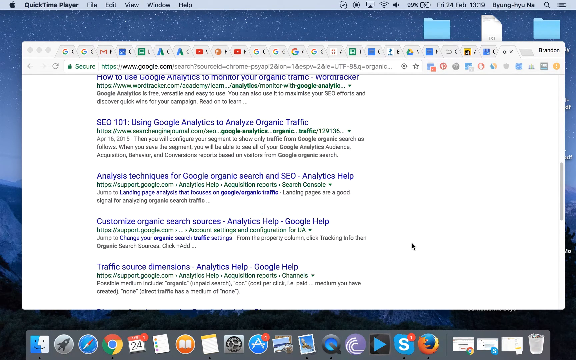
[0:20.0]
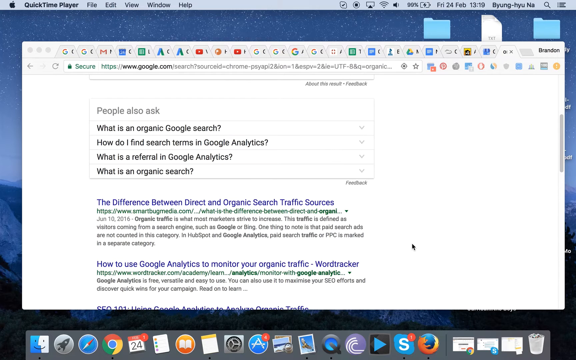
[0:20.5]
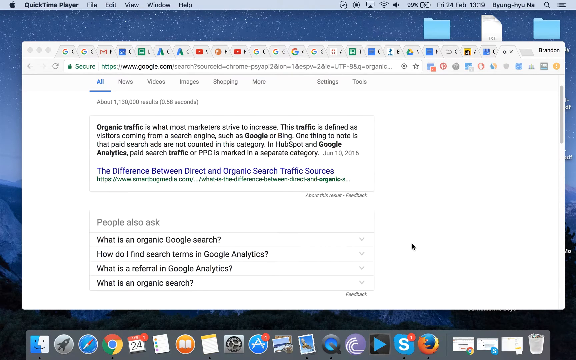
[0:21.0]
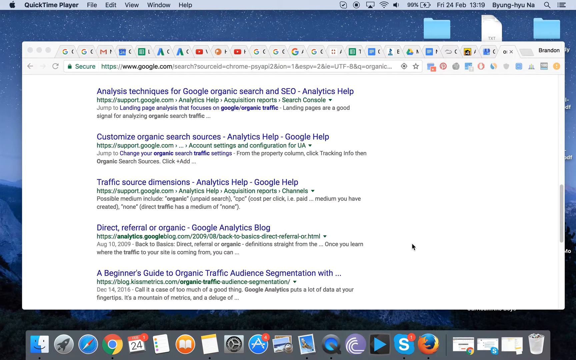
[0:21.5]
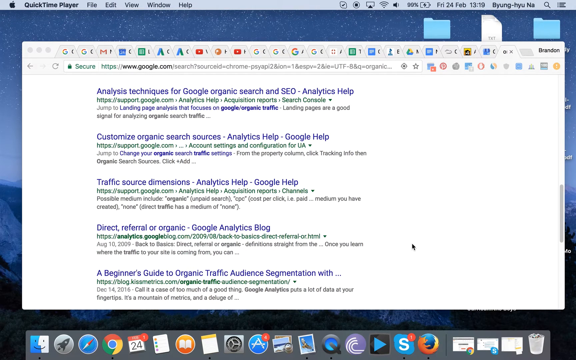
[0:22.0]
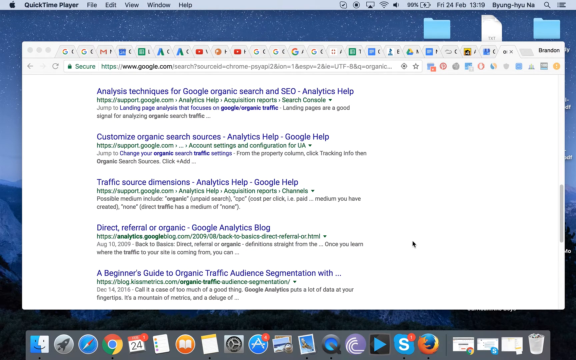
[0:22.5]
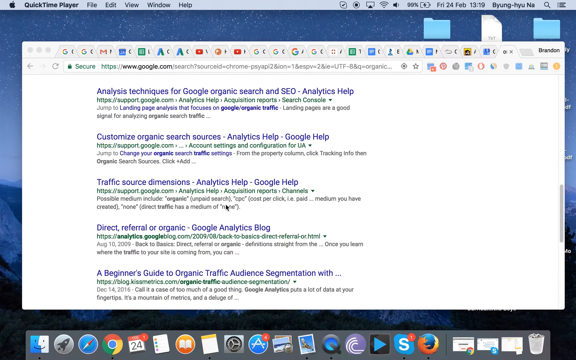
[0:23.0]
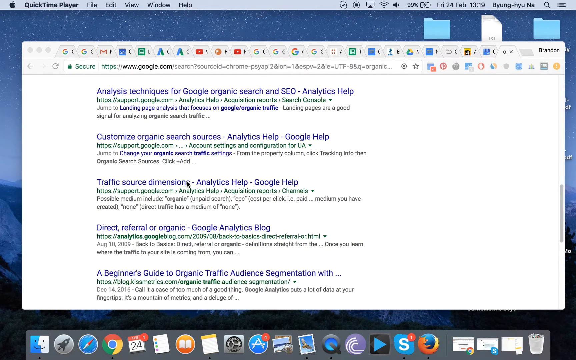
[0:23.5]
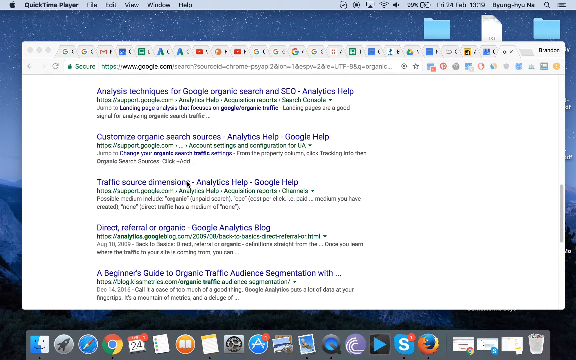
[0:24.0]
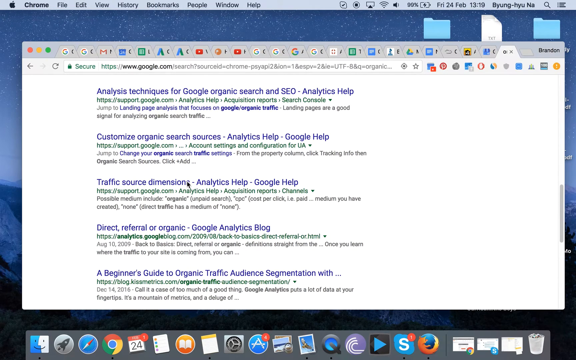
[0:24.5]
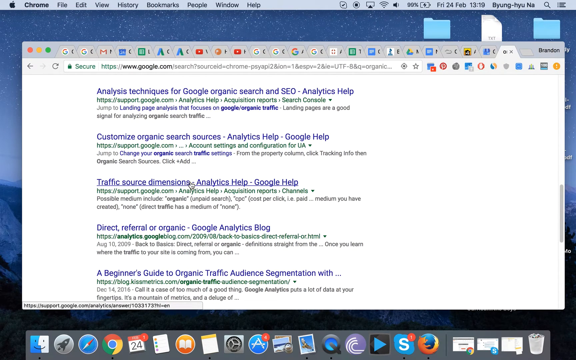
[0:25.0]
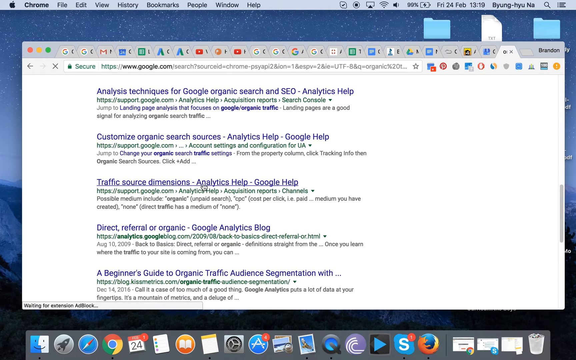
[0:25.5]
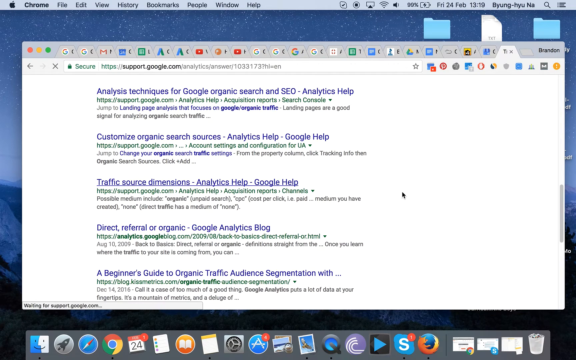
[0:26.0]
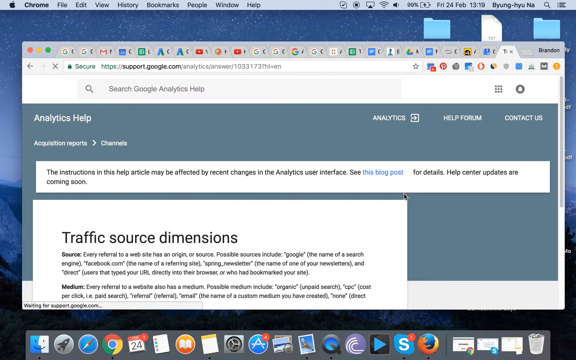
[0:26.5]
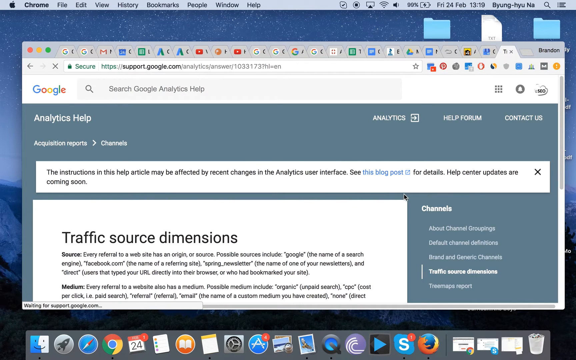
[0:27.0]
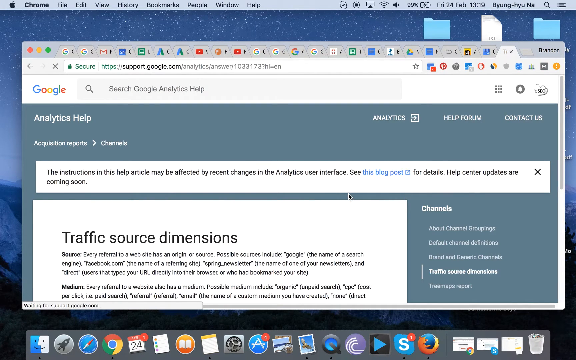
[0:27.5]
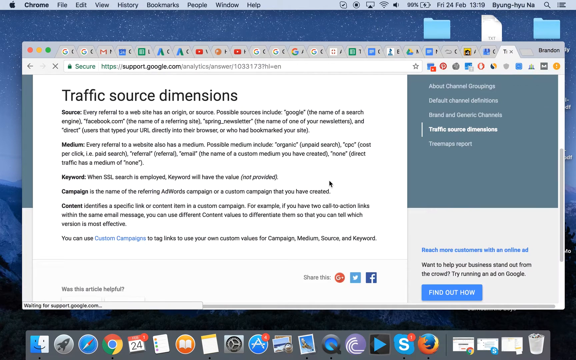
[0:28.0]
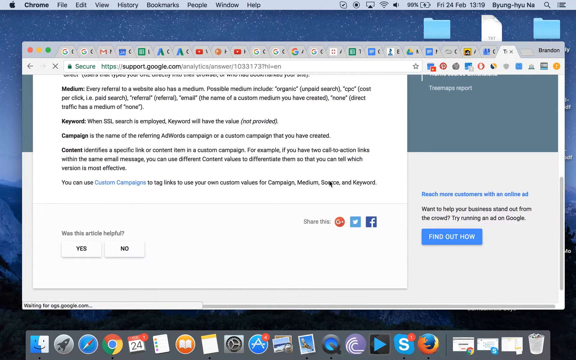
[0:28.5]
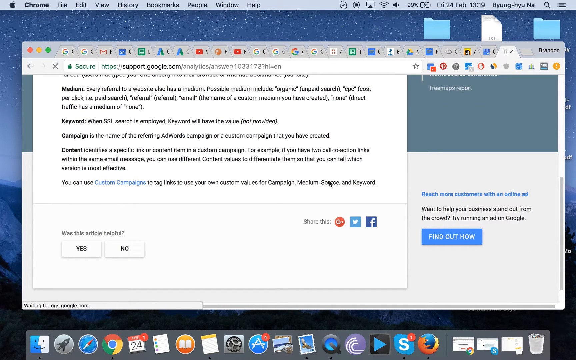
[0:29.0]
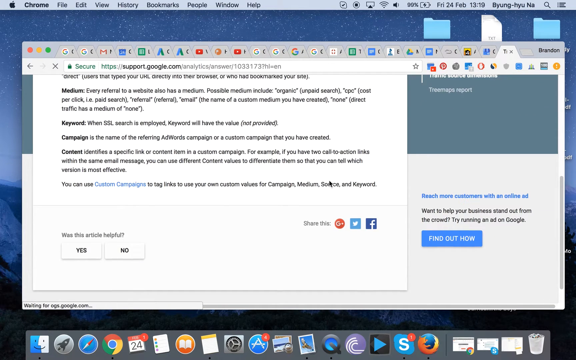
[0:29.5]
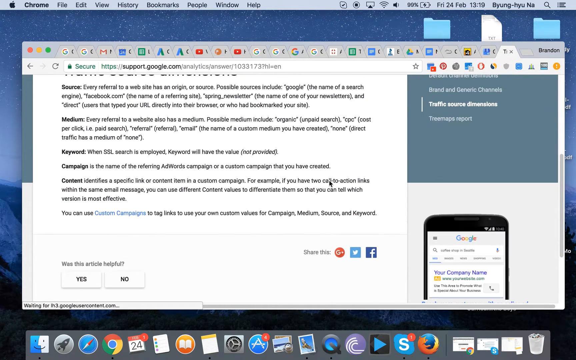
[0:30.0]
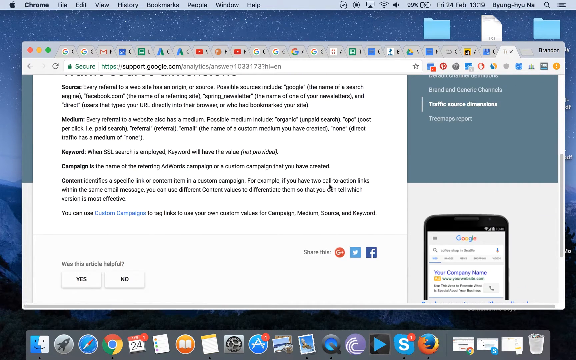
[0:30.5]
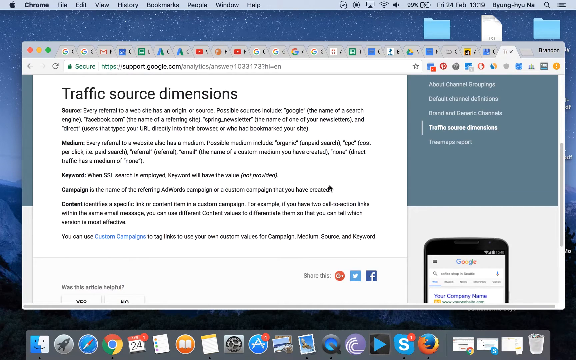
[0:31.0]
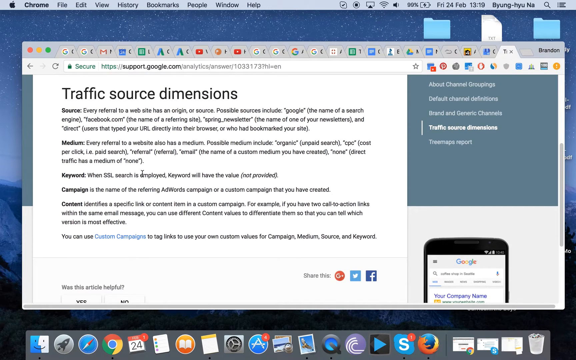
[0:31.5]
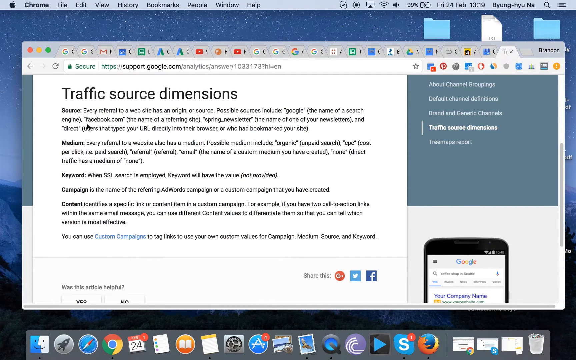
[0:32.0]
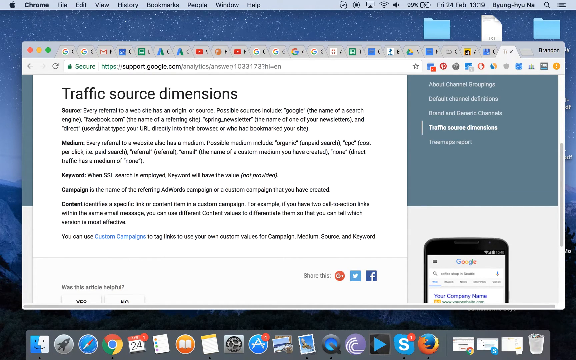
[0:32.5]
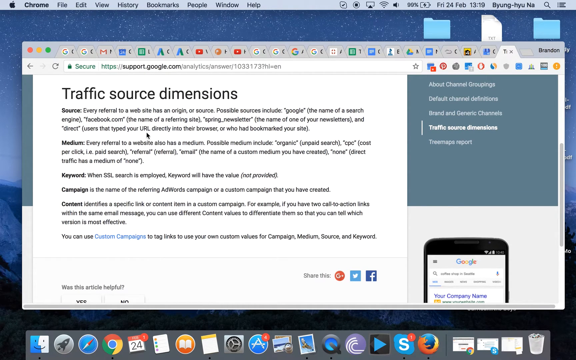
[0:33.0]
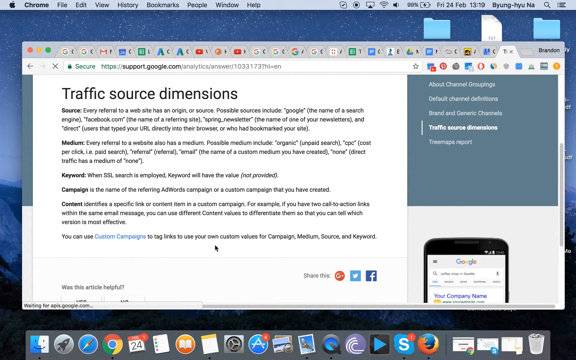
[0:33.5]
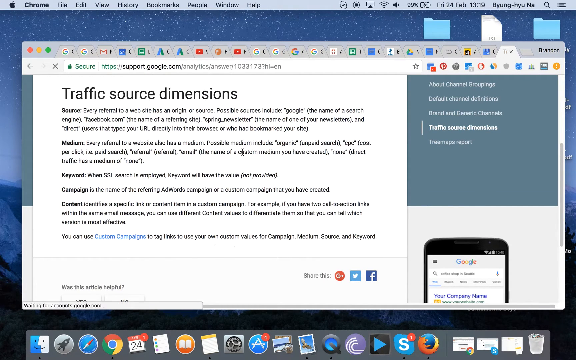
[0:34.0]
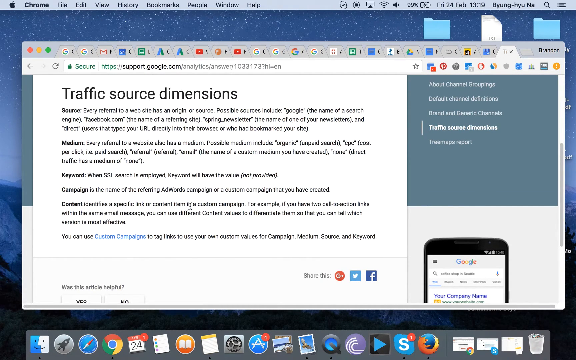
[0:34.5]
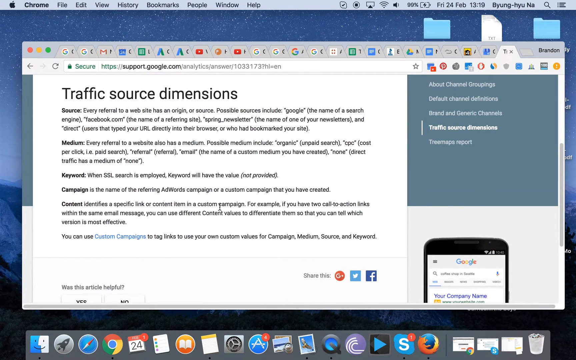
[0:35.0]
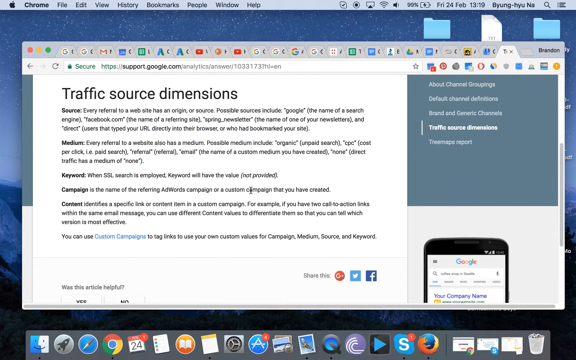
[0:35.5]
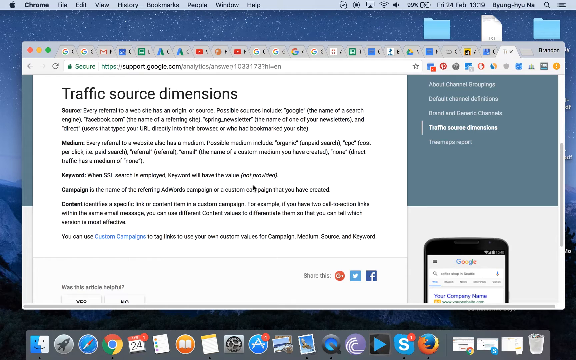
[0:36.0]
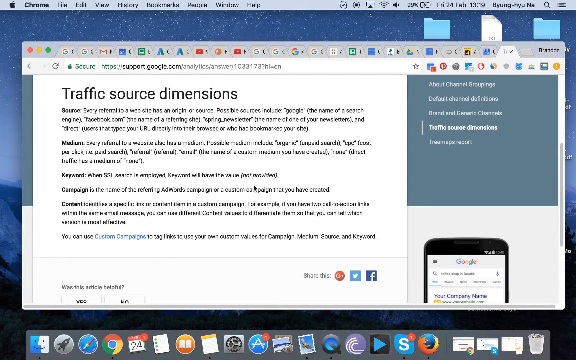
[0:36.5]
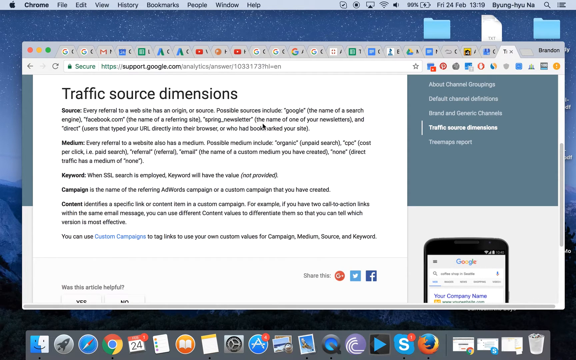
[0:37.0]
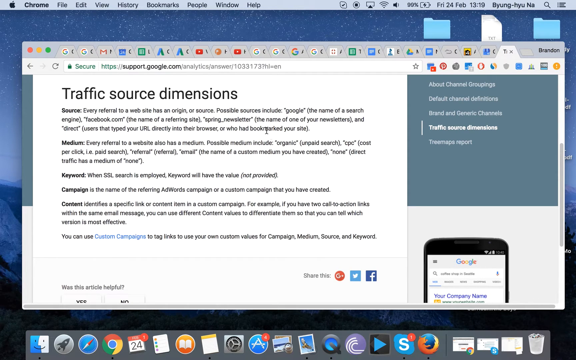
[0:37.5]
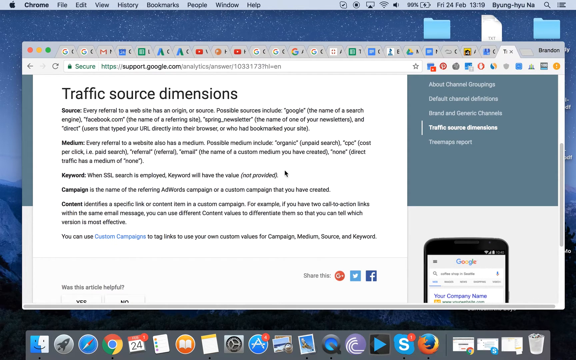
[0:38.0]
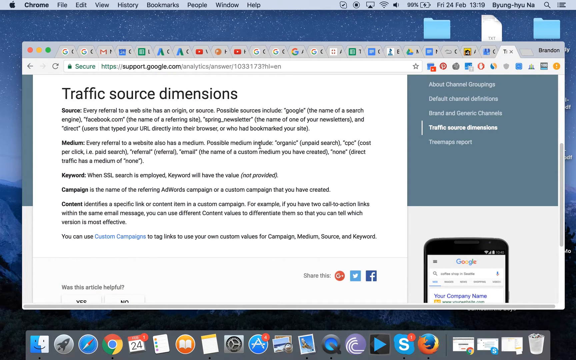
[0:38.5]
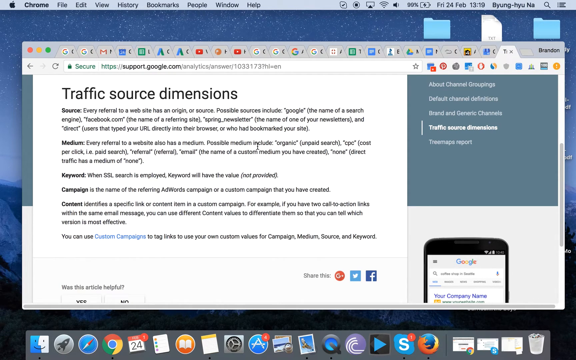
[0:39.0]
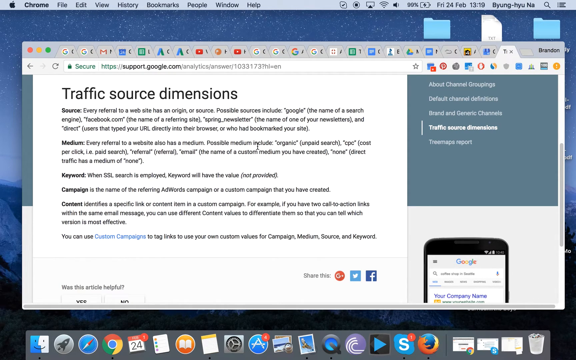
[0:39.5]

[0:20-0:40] A Google search is open in a Google tab, and the cursor moves up and down. A result about traffic source dimensions is clicked, and the page is scrolled up and down. The arrow cursor moves in an anticlockwise circular motion. The search bar is at the top. The user seems to be searching through the page, spinning the arrow a little and moving up and down. The clicked site reads "traffic source dimension - analytics help - google help", and a new page comes up. Several tabs are open along the top of the screen, apparently about 10 to 15.